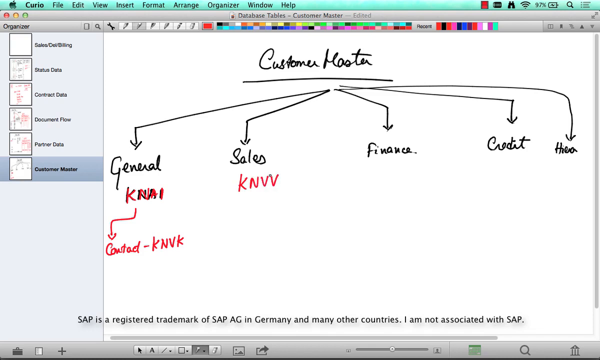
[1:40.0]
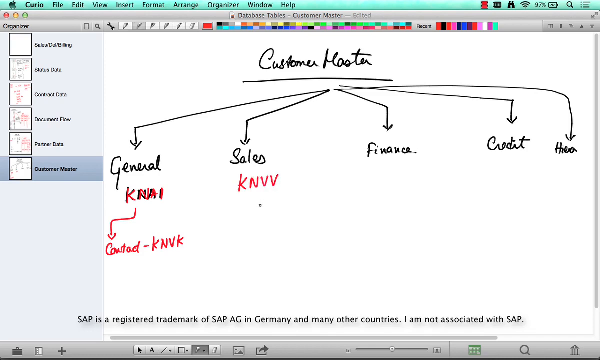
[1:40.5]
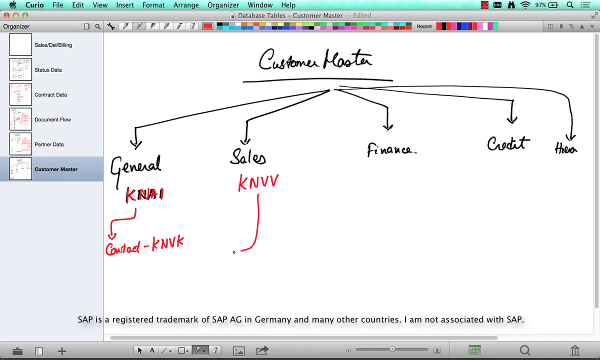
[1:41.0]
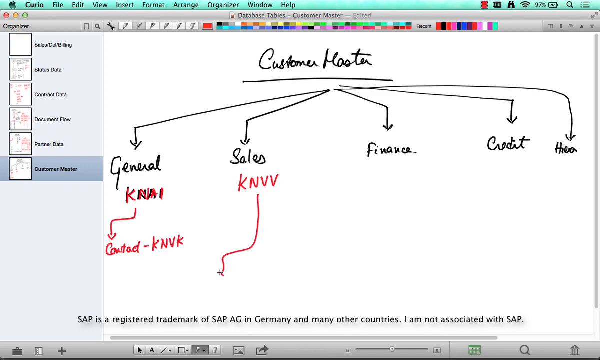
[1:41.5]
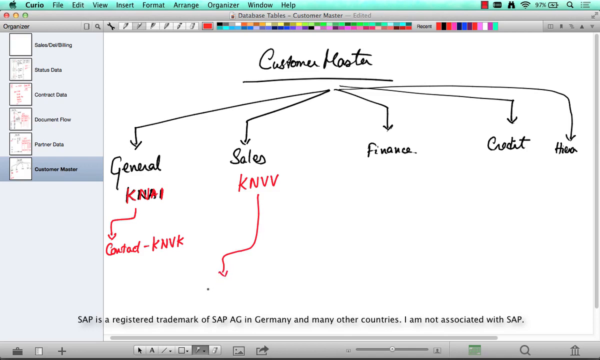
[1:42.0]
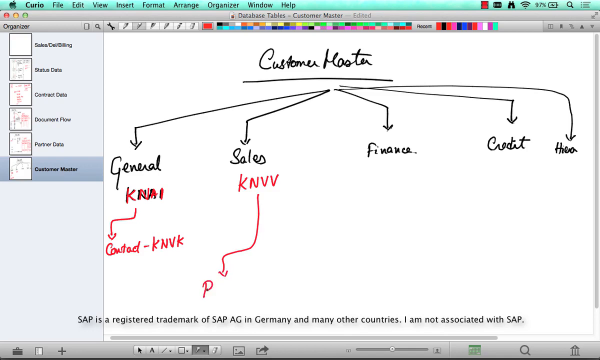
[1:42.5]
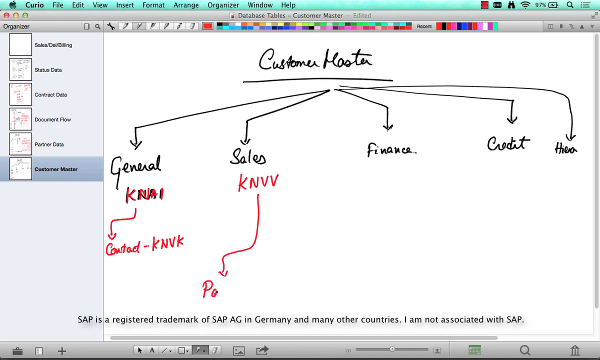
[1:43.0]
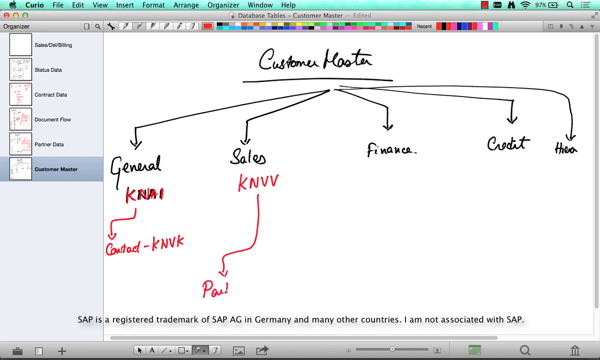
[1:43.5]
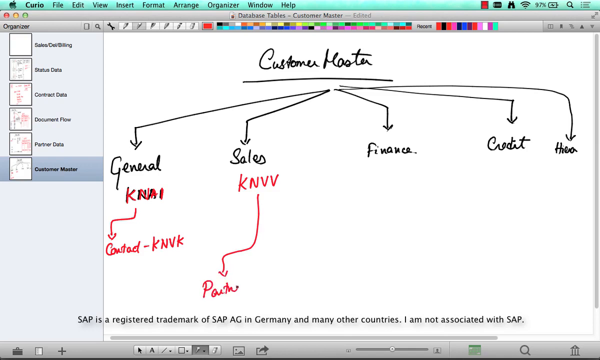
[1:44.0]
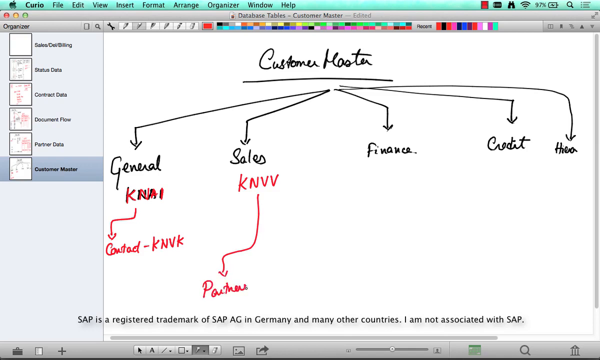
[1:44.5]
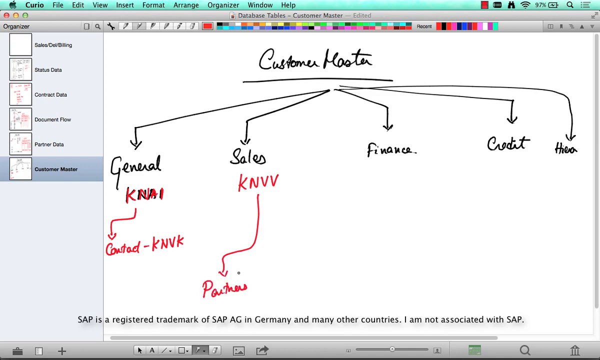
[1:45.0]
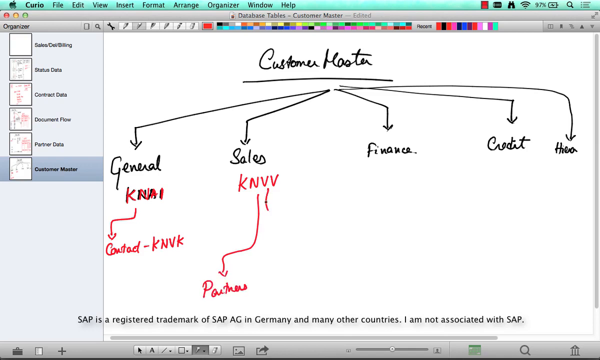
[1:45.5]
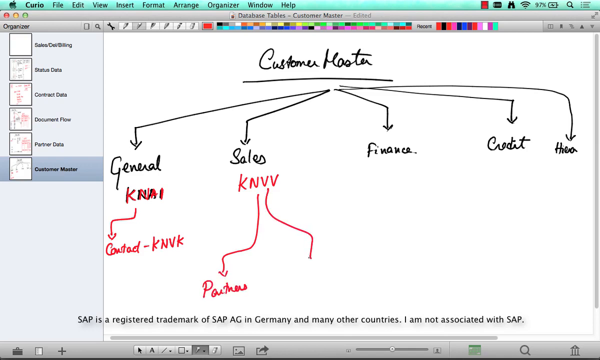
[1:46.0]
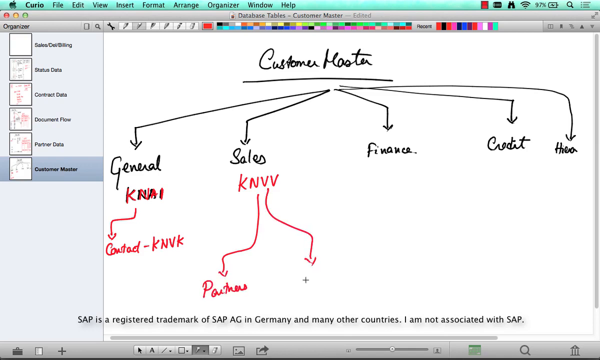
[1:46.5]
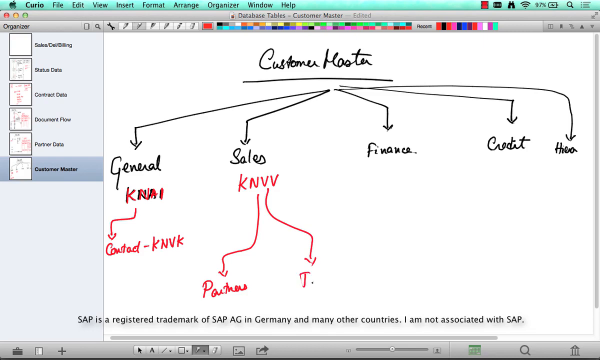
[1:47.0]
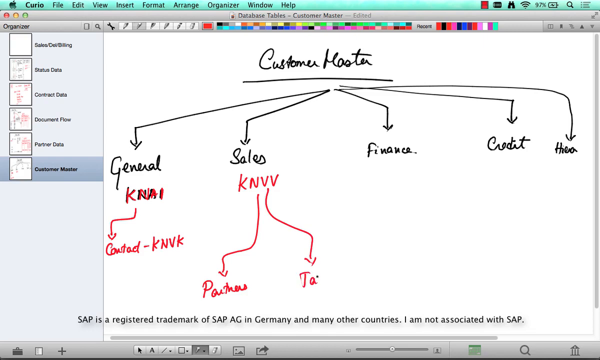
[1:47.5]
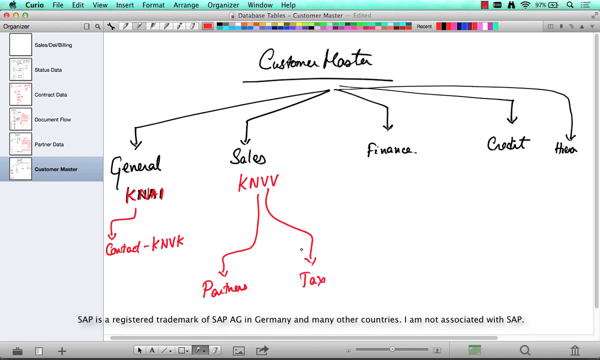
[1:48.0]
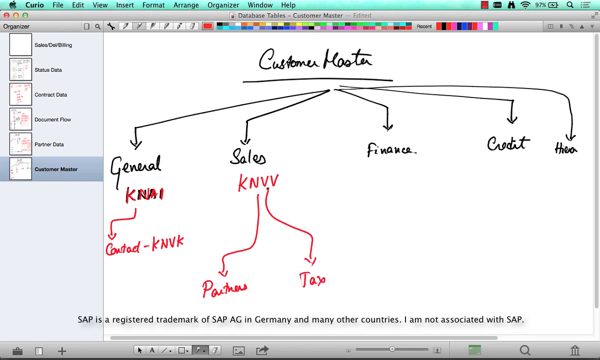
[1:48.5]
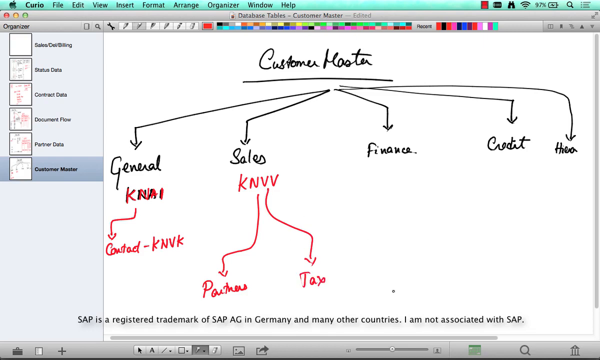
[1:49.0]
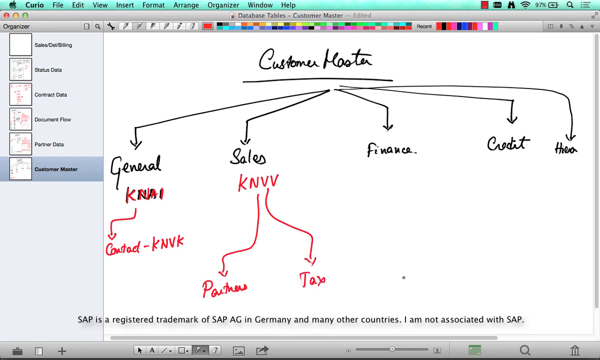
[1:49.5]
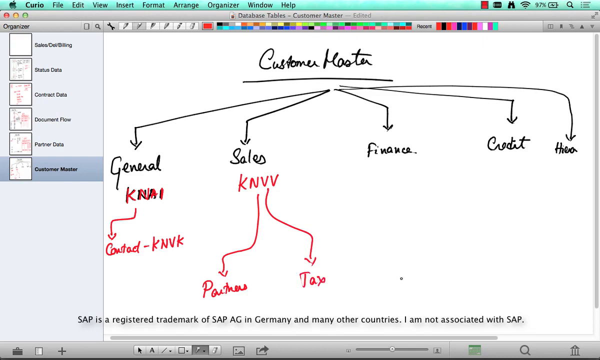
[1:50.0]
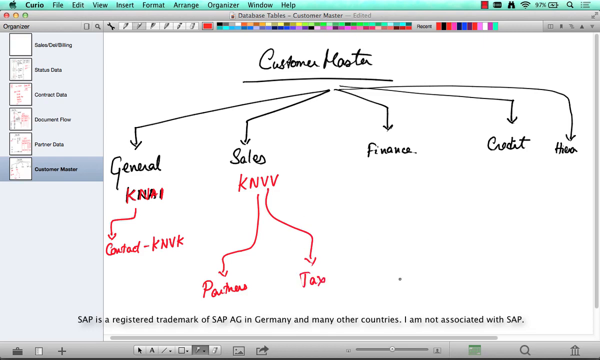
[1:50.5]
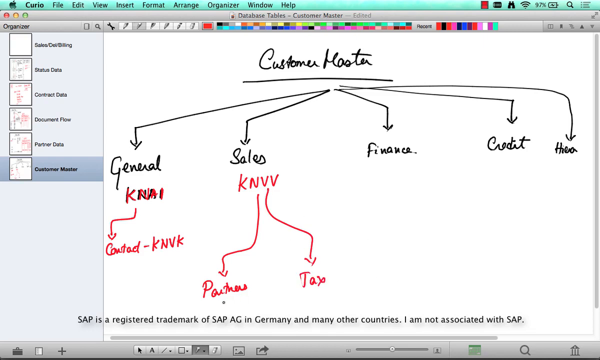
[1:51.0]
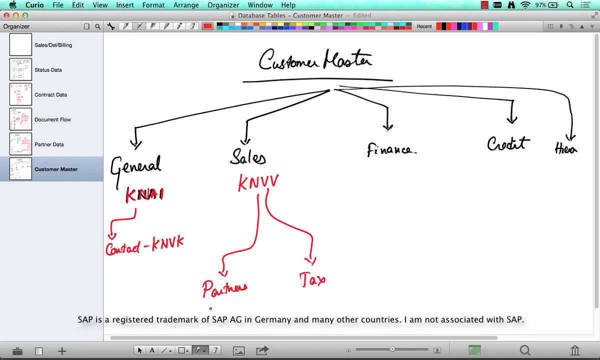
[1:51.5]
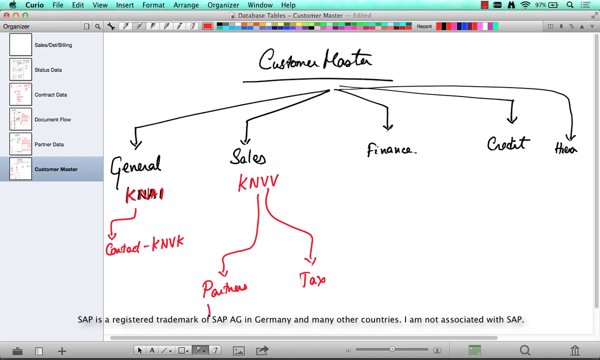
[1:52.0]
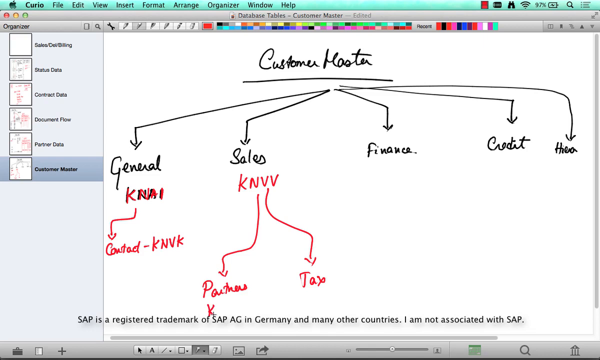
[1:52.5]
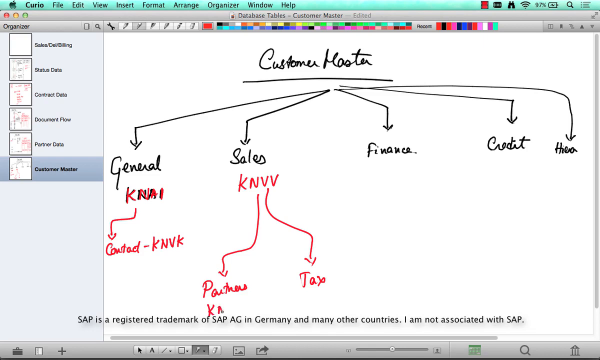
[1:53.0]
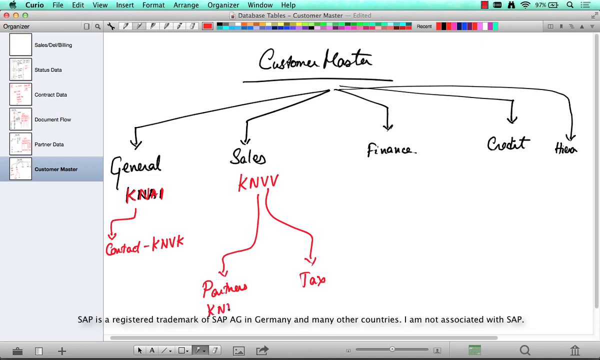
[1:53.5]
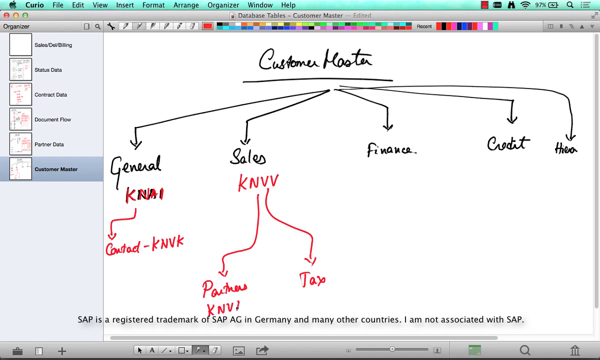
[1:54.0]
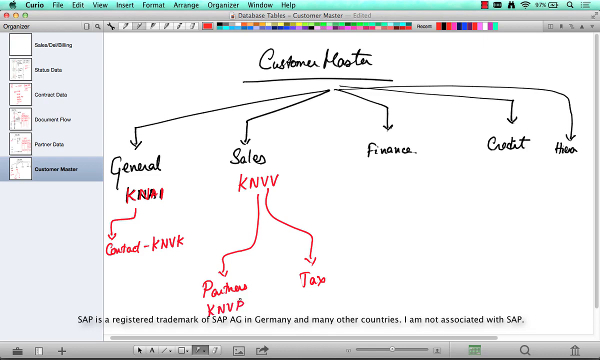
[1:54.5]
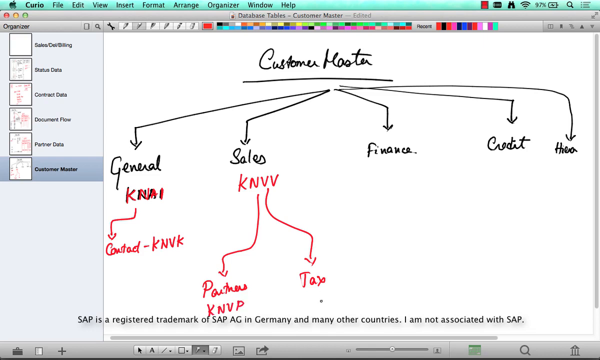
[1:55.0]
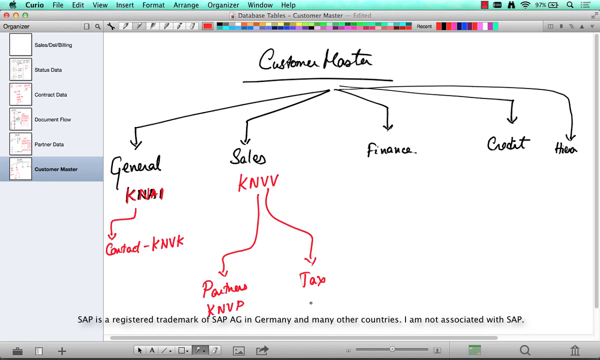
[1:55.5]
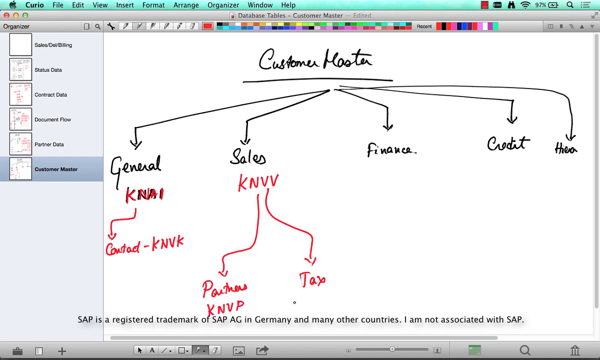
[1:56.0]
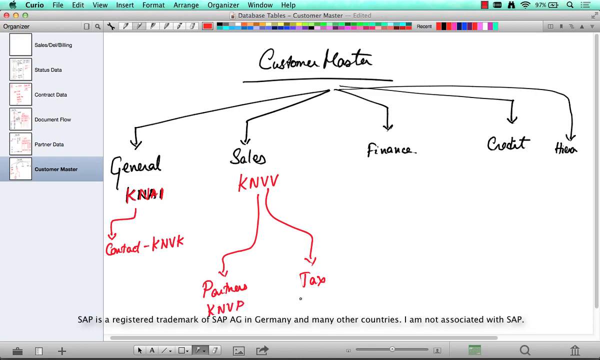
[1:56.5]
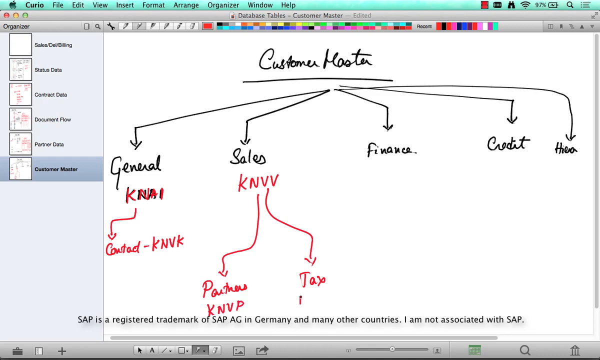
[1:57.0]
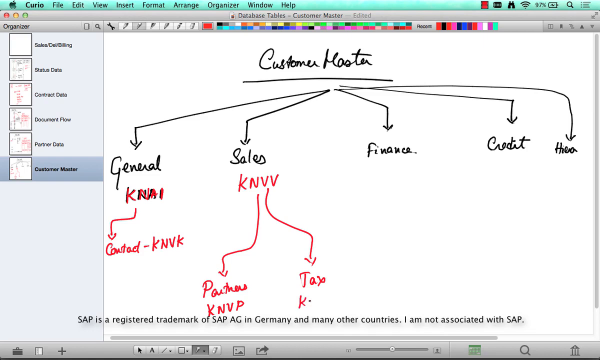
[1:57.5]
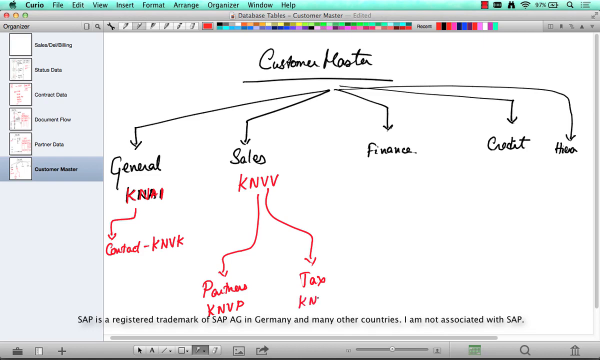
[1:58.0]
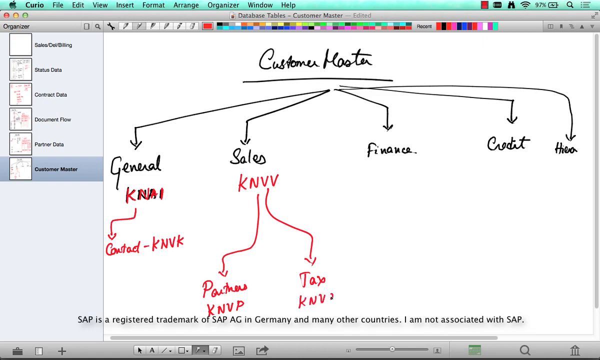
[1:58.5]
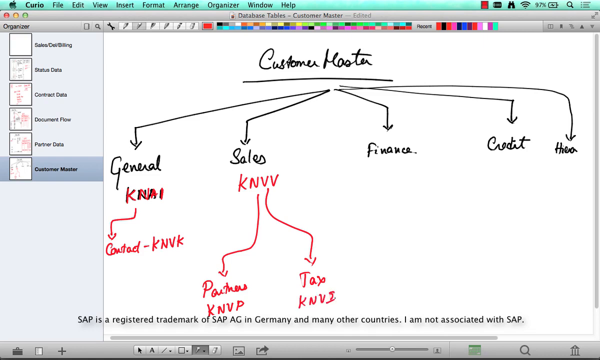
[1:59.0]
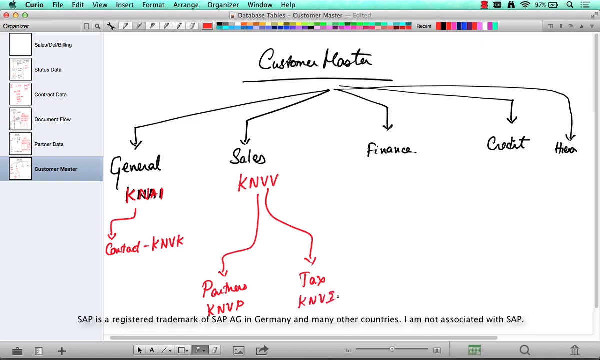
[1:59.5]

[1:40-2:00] Under KNVV, beneath sales, another arrow goes down to the left and then down again, and the word "partners" is written, apparently in cursive, which makes it harder to read. Another arrow extends below KNVV down to the right and then down again, and the word "tax" is written in red. Under partners, "KNVP" is written, and under tax, "KNVI". The writing continues in red below the five main headers drawn earlier; the codes seem to be short codes representing each heading, such as KNVI for tax and KNVV for sales. The battery indicator shows 97% and charging.